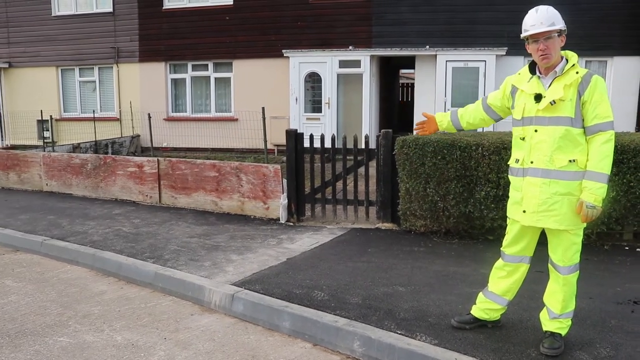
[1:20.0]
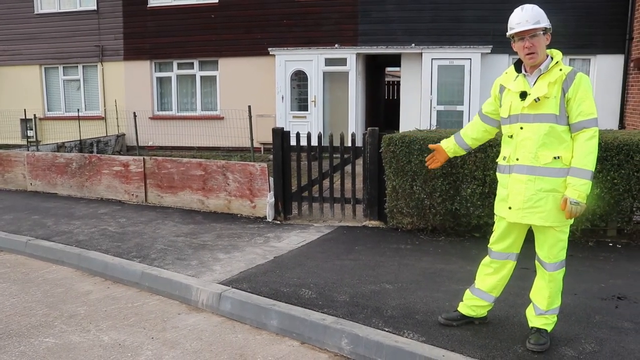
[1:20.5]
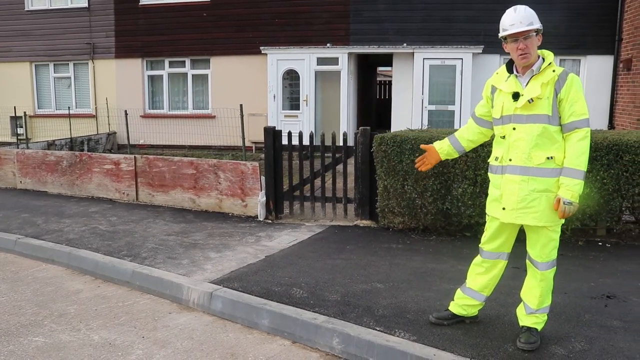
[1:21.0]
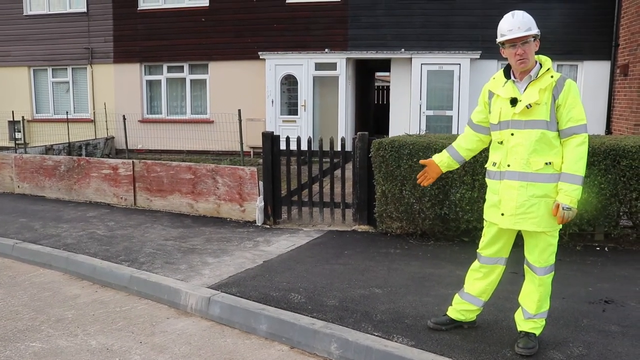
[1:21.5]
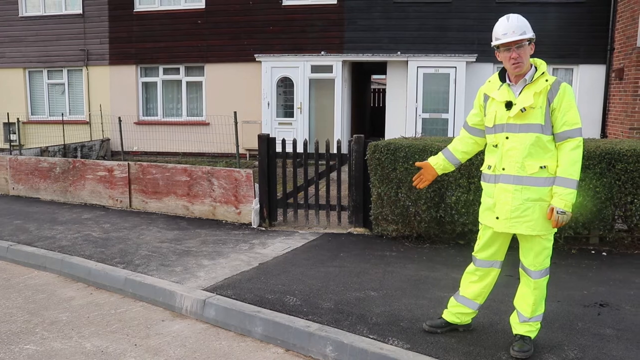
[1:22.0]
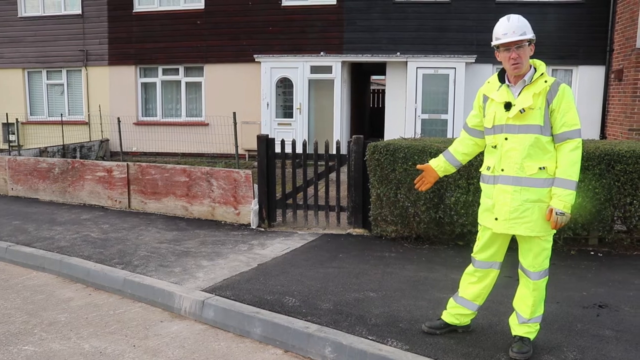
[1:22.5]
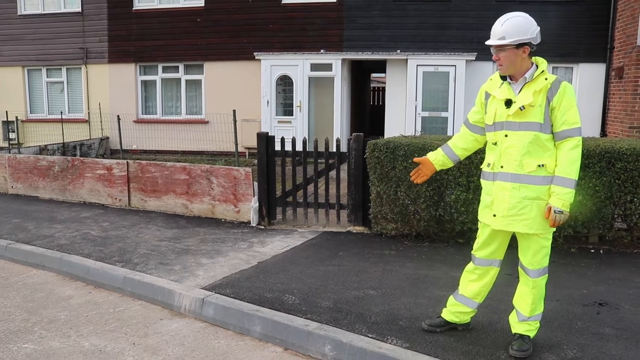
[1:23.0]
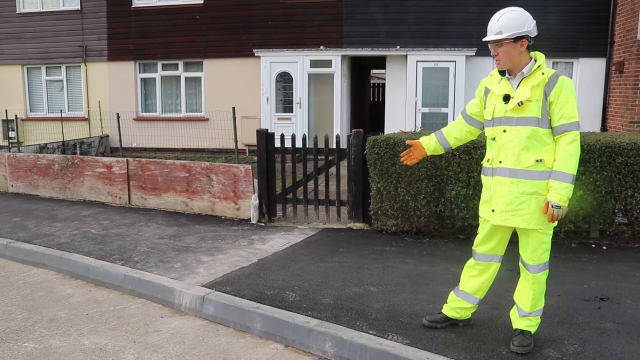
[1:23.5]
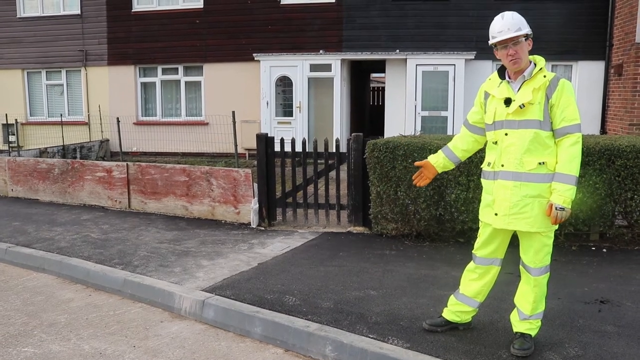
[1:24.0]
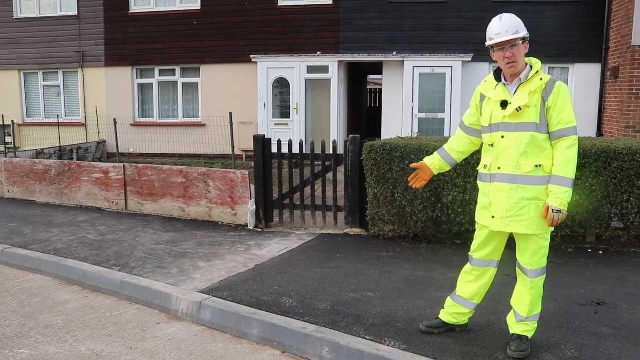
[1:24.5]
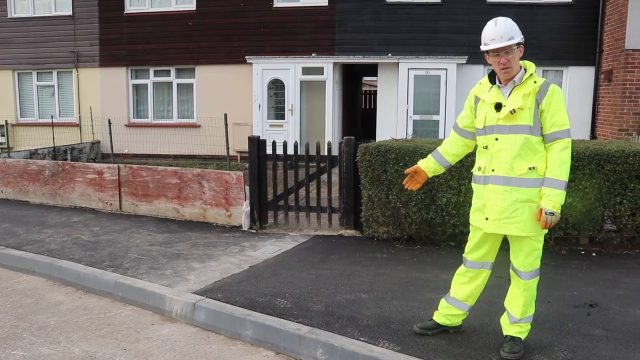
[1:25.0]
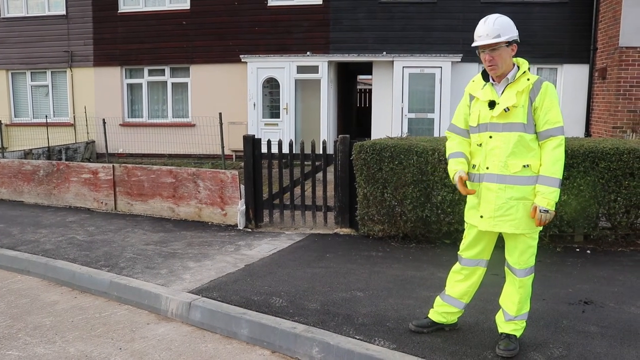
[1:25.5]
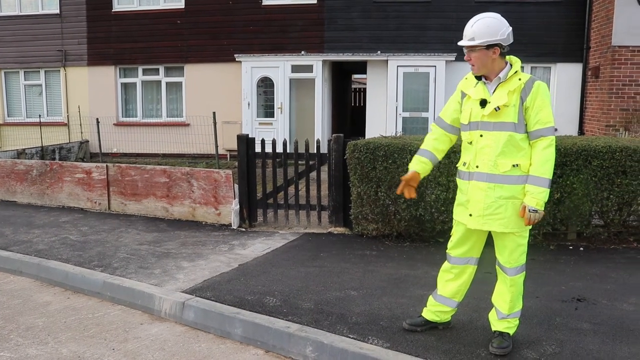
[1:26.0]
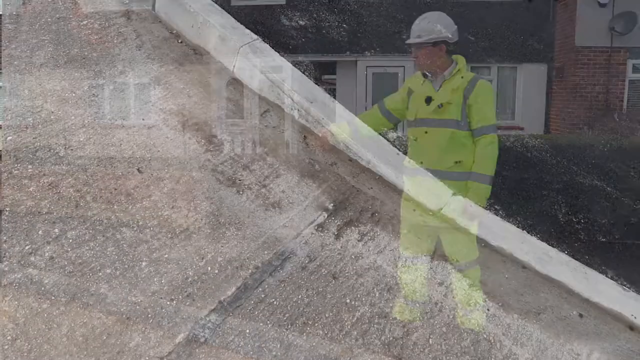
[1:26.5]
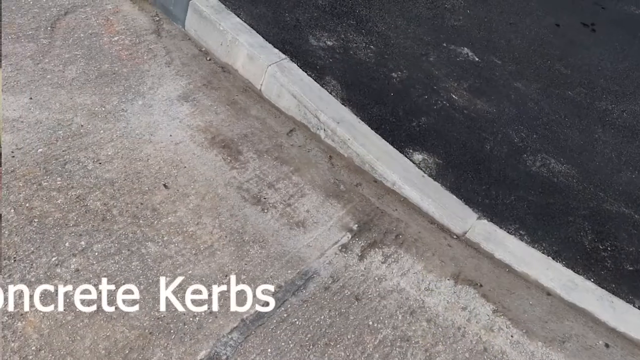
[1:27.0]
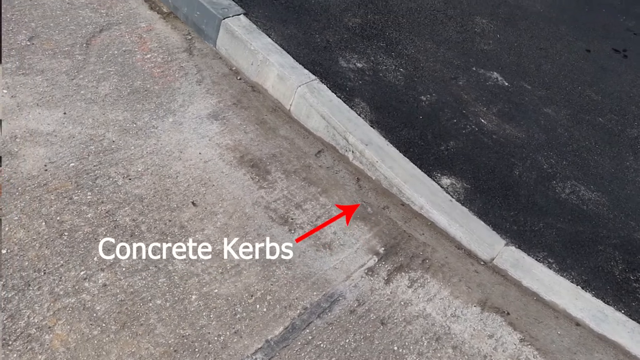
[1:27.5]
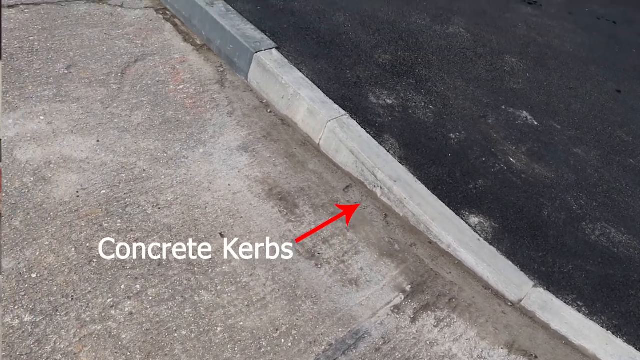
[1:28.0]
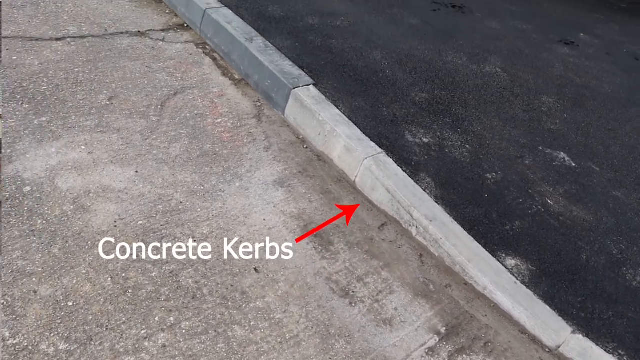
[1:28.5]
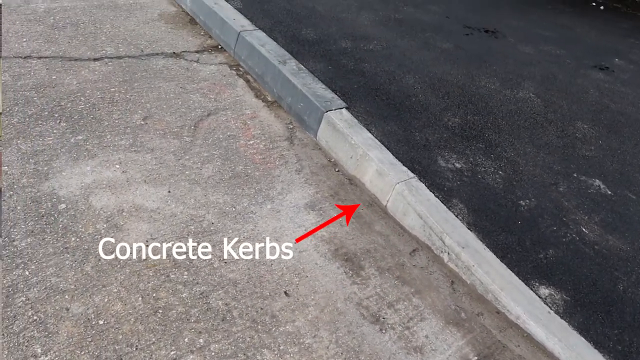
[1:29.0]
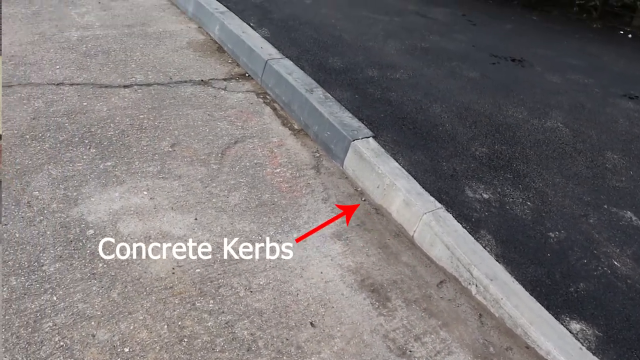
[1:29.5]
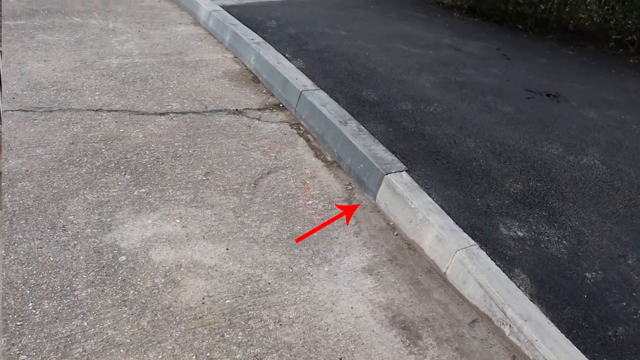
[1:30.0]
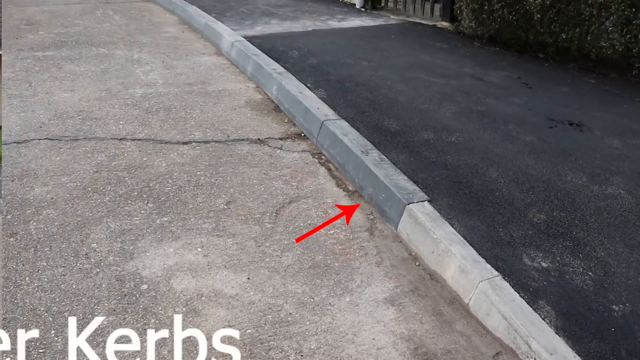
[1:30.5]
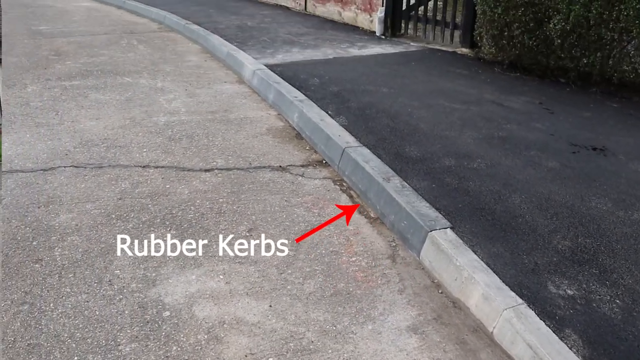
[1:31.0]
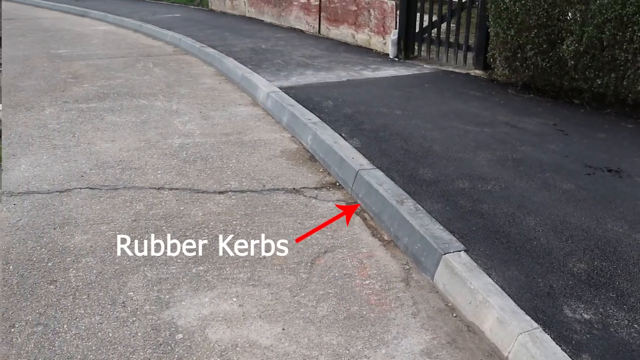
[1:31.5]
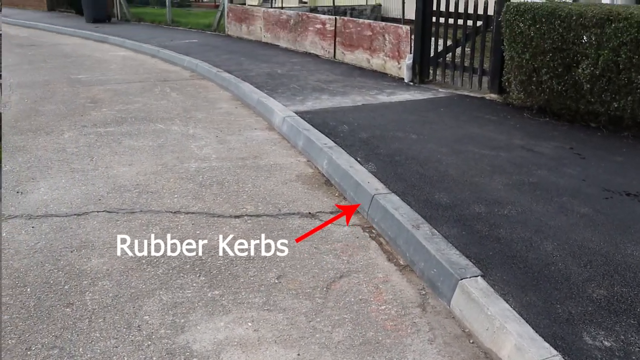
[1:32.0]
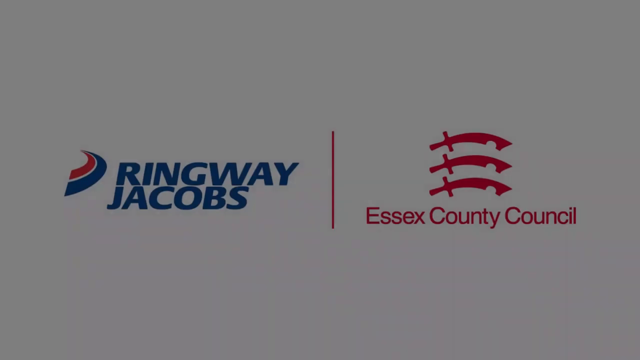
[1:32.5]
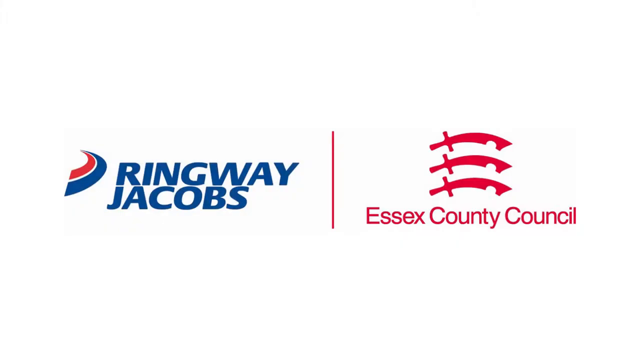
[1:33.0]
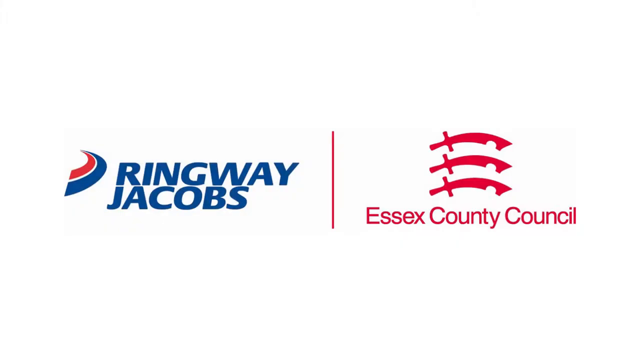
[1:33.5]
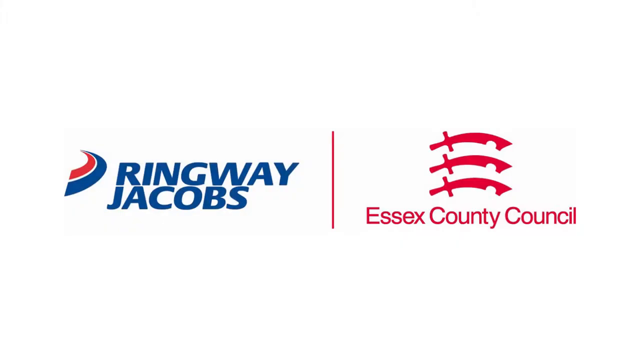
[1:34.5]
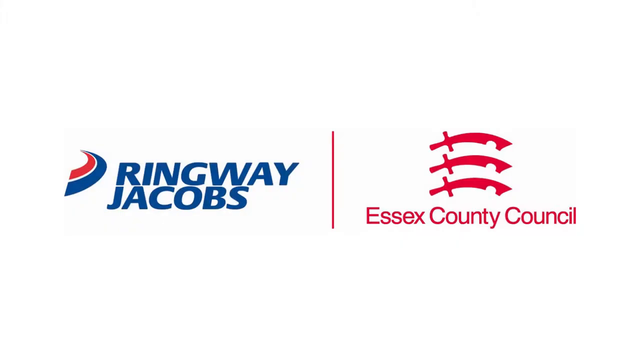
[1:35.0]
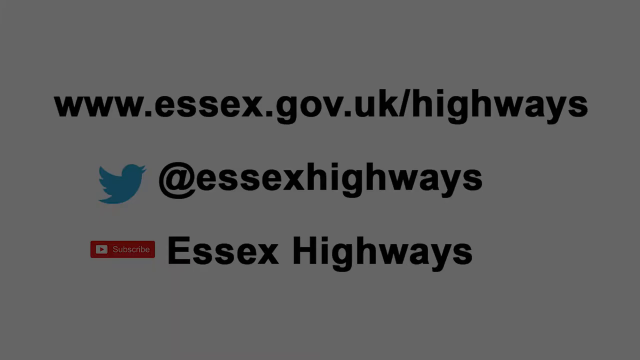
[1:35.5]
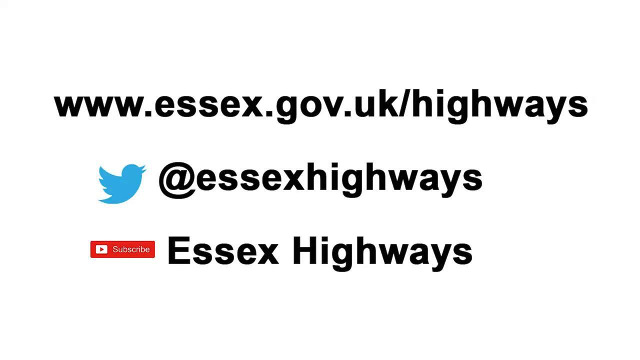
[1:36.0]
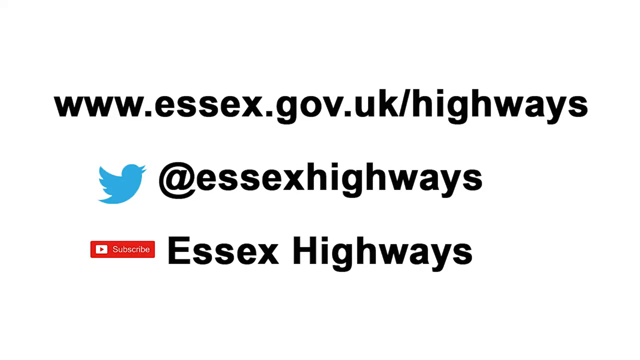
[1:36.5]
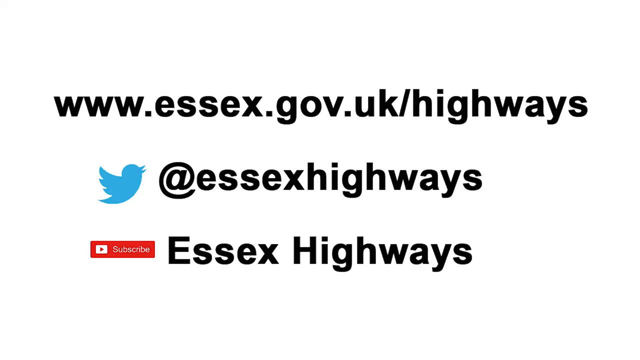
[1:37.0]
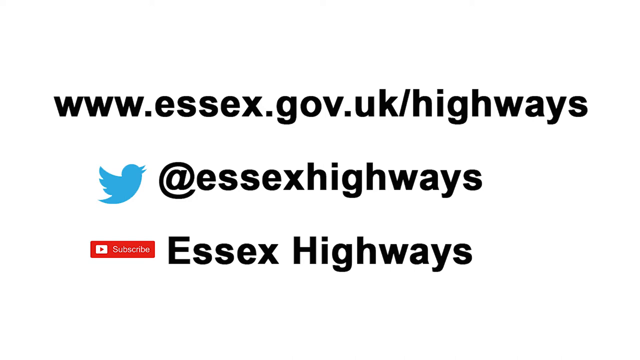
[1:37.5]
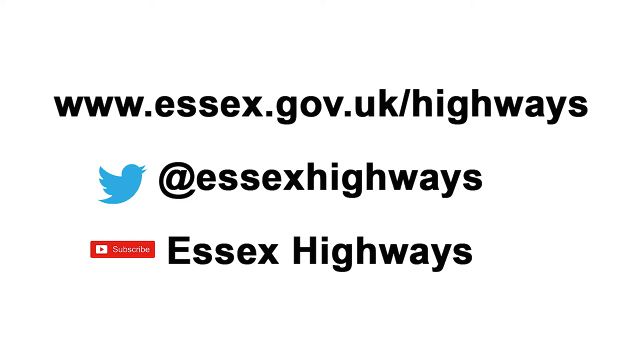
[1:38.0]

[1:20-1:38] The counselor keeps gesturing toward the curbing. The curb appears to be made of two materials: the part he stands on looks like darker gravel, while the other half, on the left side of the curb, looks like lighter gray cobblestone. A close-up shows where the curb meets the sidewalk. On the curb, a red arrow points toward it with the text "concrete kerbs", and as the view moves up, the text "rubber kerbs" appears with a red arrow next to it, showing where the concrete and rubber kerbs meet. An ending title card shows two logos on a white background: "Ringway Jacobs" on the left and "Essex County Council" on the right. The last title card shows the Essex.gov website, a Twitter handle and YouTube.